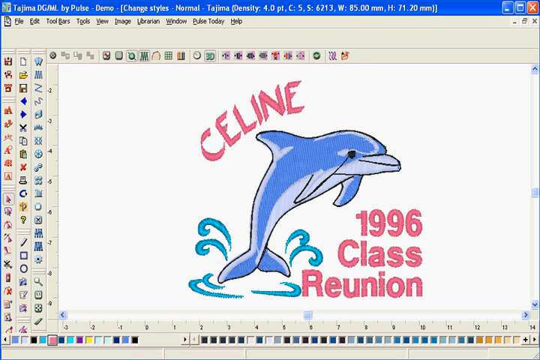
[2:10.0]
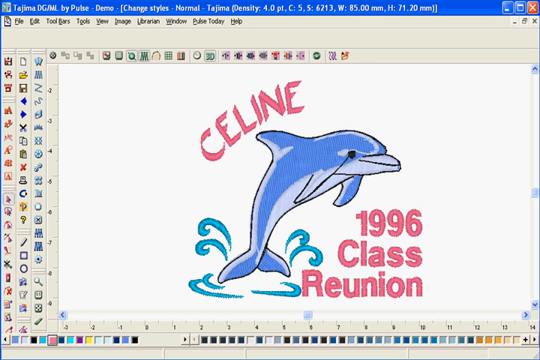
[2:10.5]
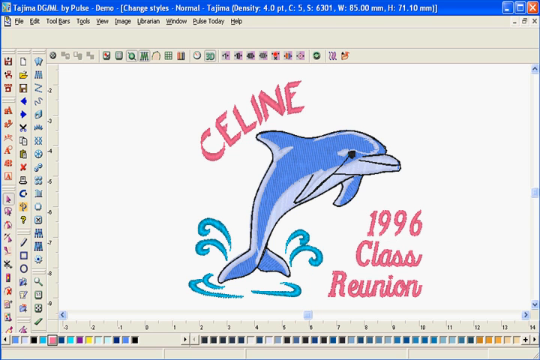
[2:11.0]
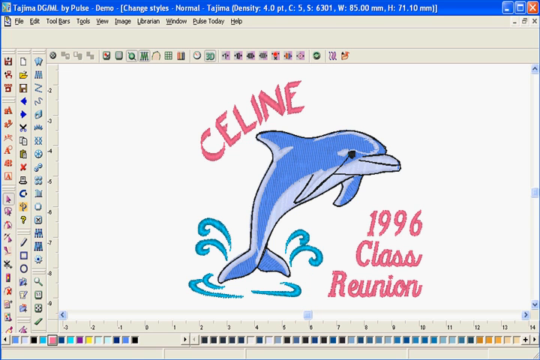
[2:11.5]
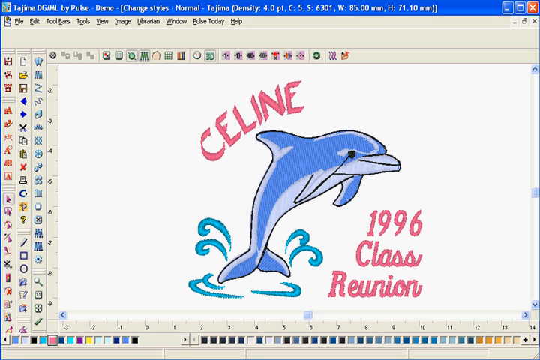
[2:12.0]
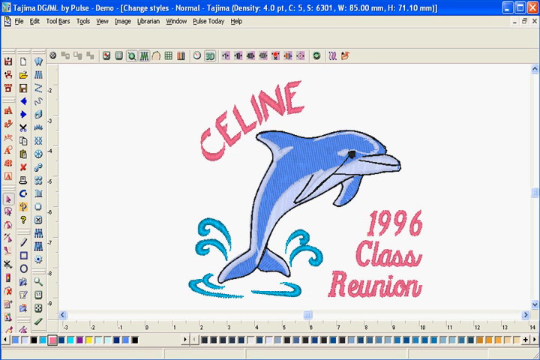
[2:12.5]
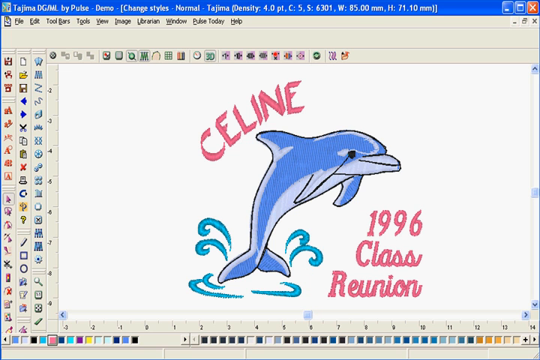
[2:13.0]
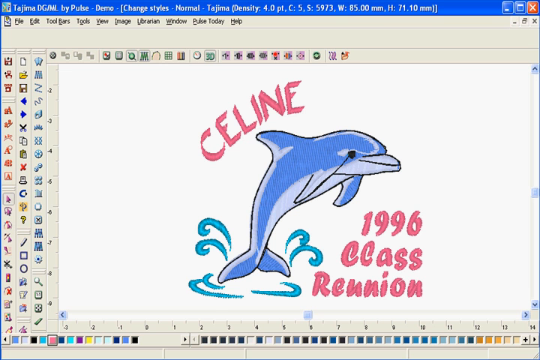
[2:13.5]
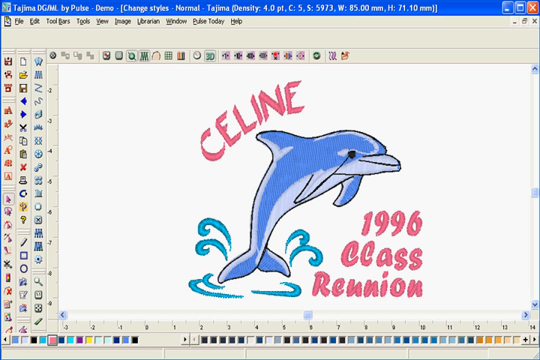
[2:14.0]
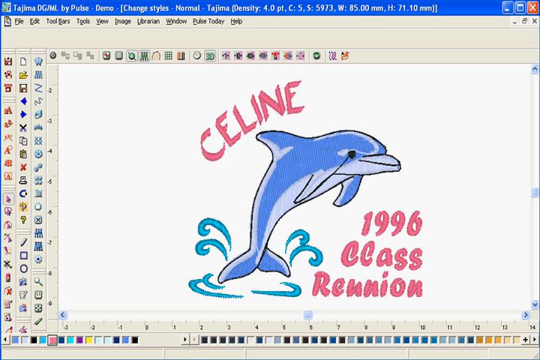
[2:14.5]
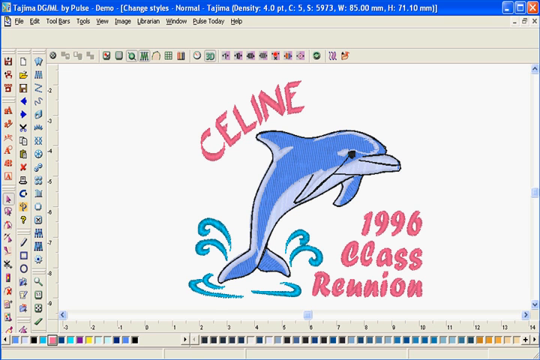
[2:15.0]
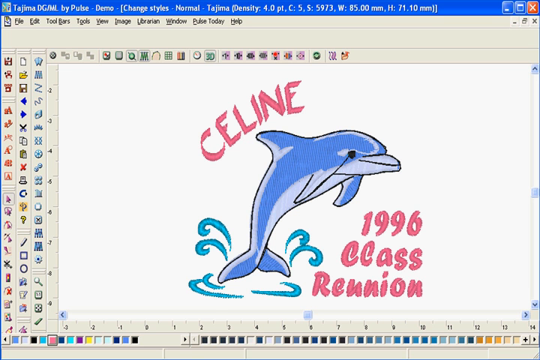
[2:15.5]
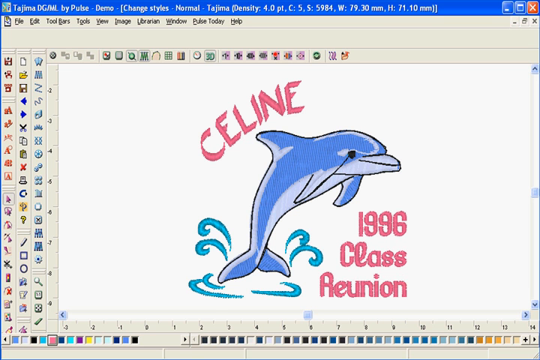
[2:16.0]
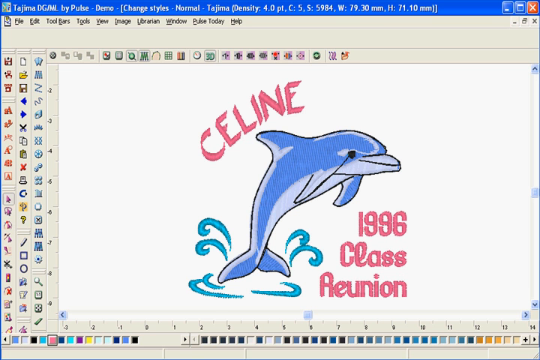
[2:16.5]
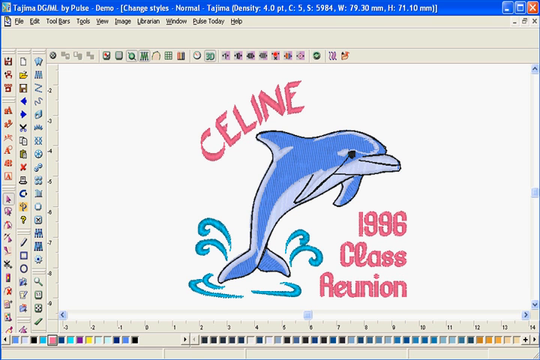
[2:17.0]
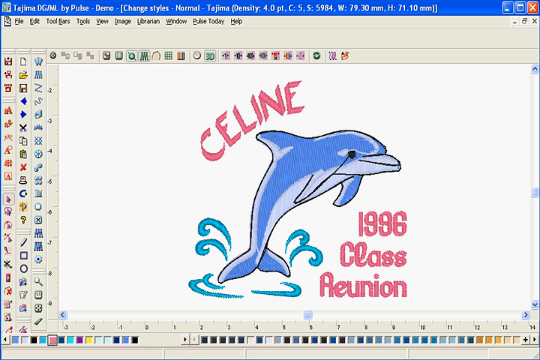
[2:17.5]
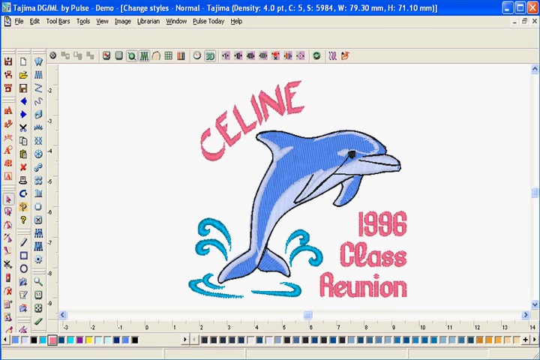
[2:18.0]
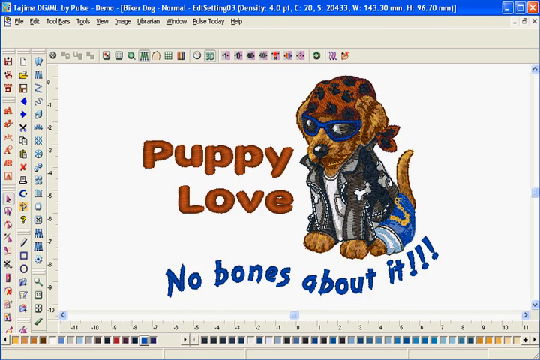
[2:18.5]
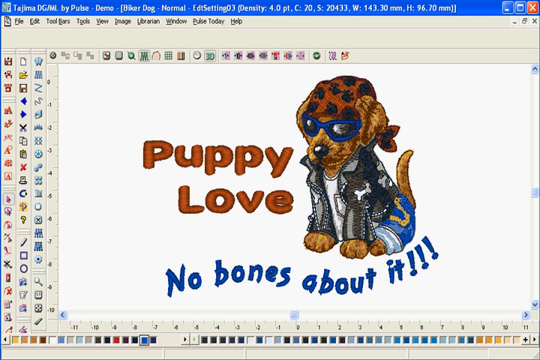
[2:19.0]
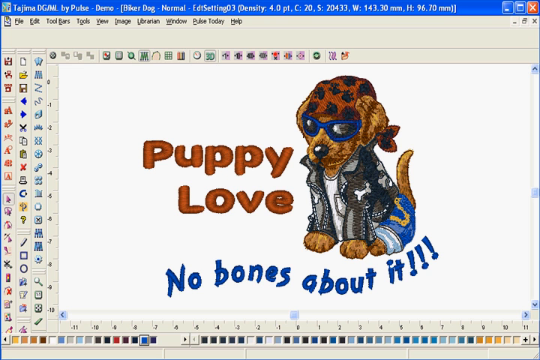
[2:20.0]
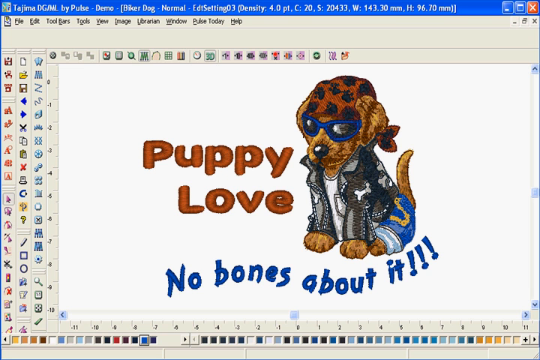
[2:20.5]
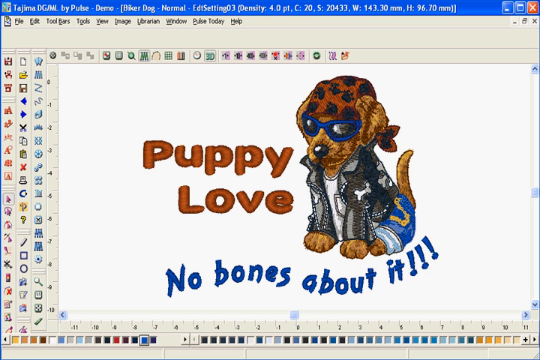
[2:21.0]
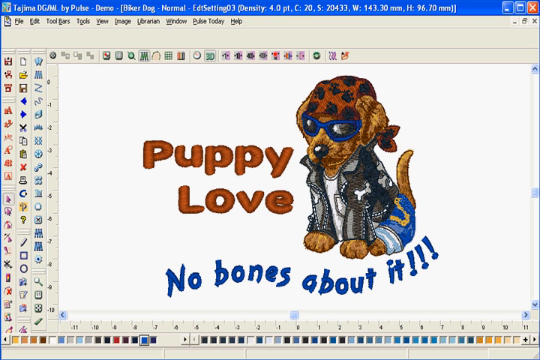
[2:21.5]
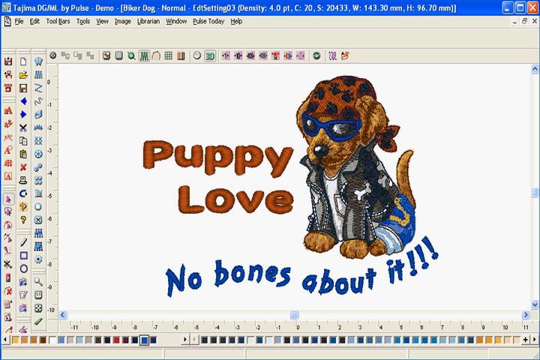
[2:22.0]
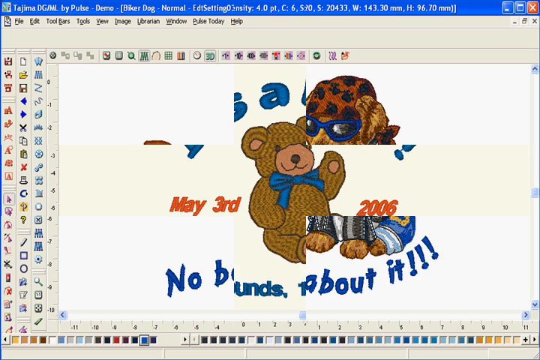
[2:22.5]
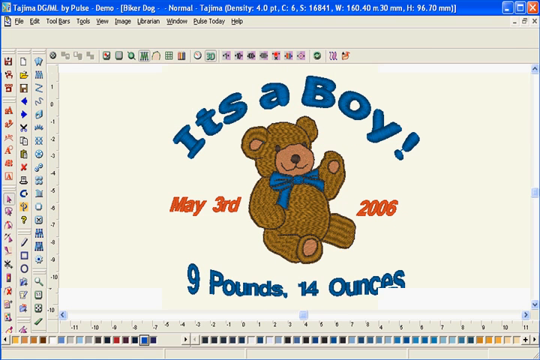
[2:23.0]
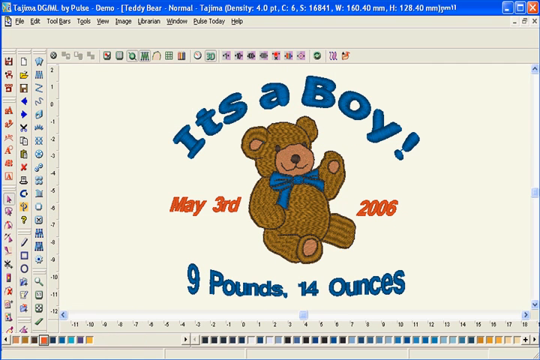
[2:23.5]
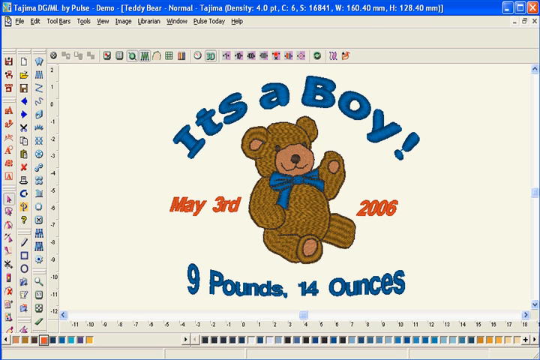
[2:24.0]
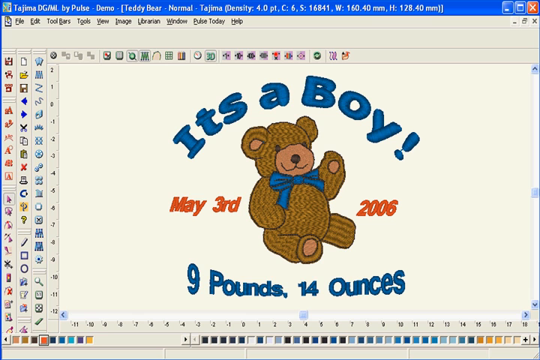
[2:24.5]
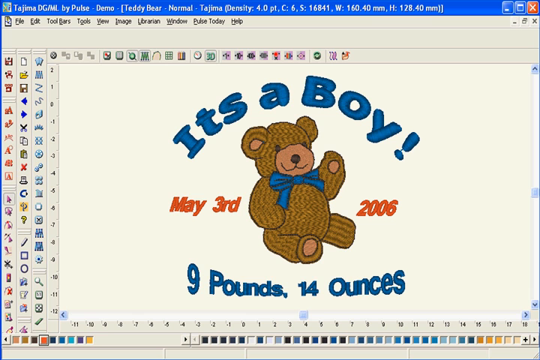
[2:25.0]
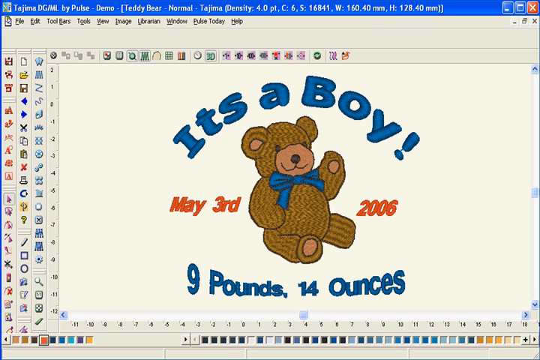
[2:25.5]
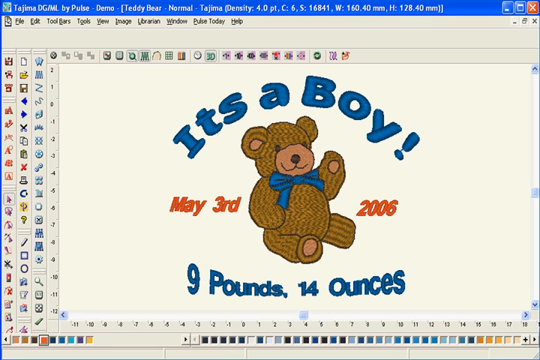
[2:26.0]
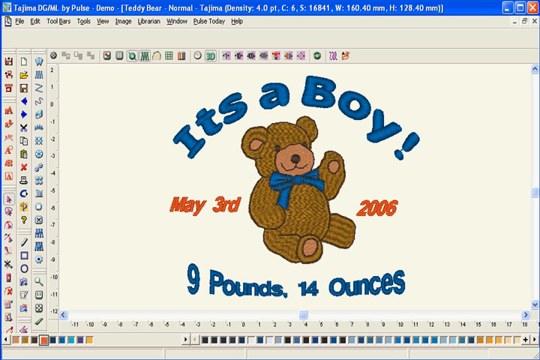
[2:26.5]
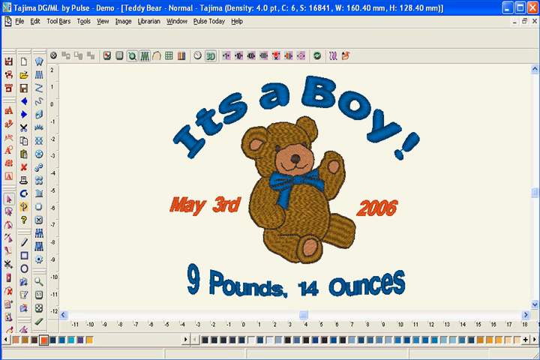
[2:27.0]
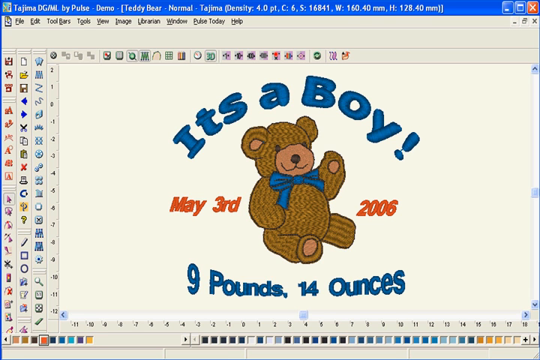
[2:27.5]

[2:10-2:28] A computer program for making fonts for embroidering onto shirts and other items shows a dolphin jumping out of the water, in a somewhat bluish purple color. The upper portion says "Celine," followed by "1996 class reunion." Different fonts are applied to "1996 class reunion" while "Celine" stays the same. Next, the text "puppy love, no bones about it" appears with a puppy dressed in sunglasses, a leather coat, and blue jeans. Then the text reads "it's a boy, May 3, 2006, nine pounds, 14 ounces," with a teddy bear in the middle.